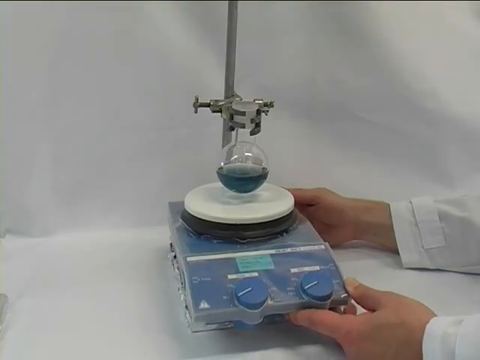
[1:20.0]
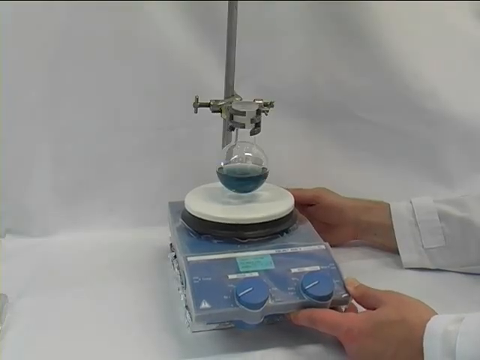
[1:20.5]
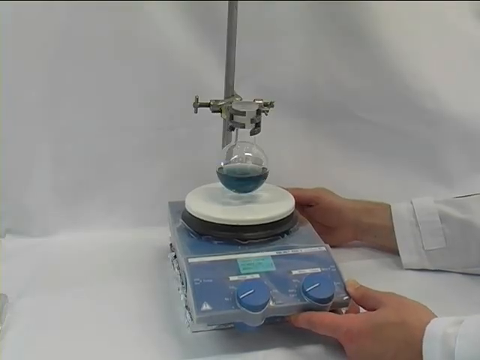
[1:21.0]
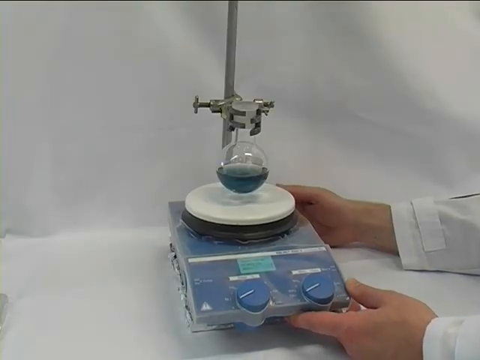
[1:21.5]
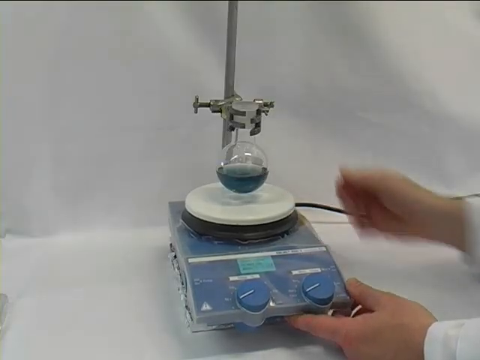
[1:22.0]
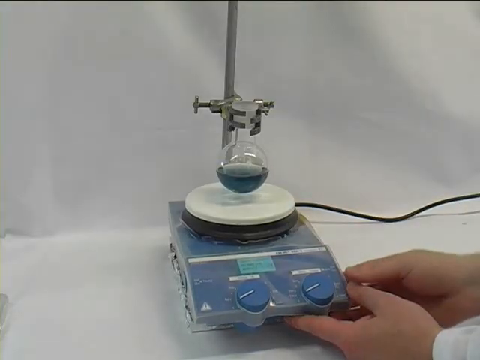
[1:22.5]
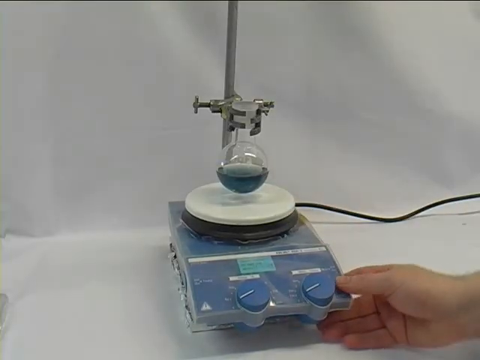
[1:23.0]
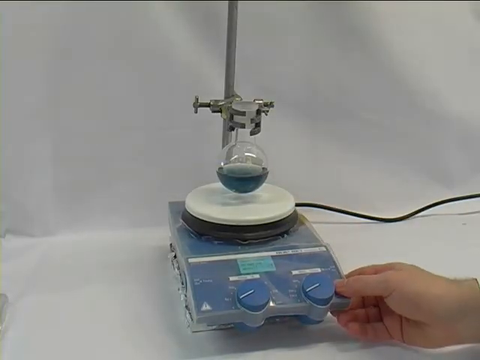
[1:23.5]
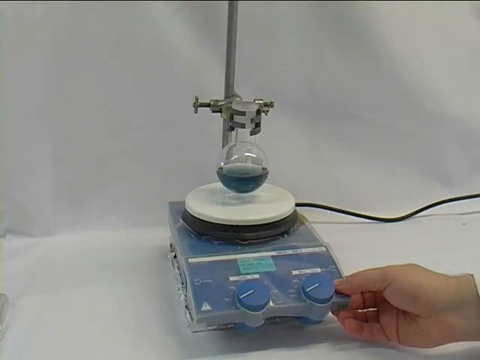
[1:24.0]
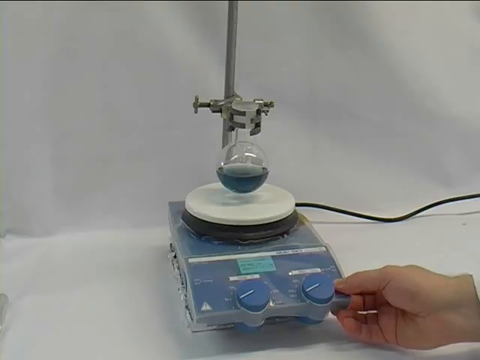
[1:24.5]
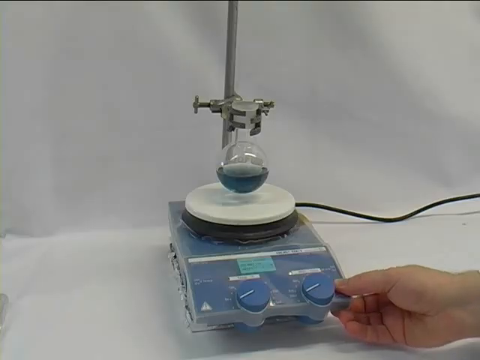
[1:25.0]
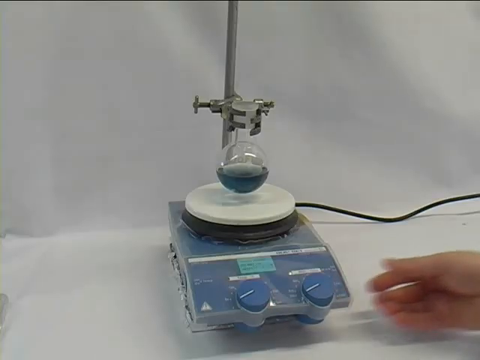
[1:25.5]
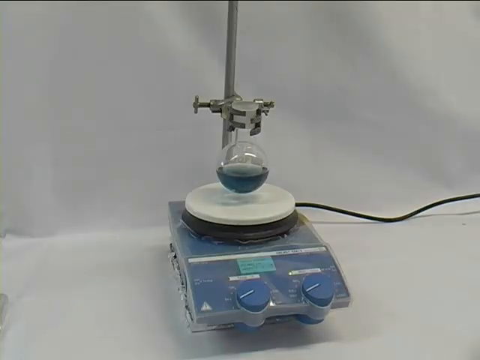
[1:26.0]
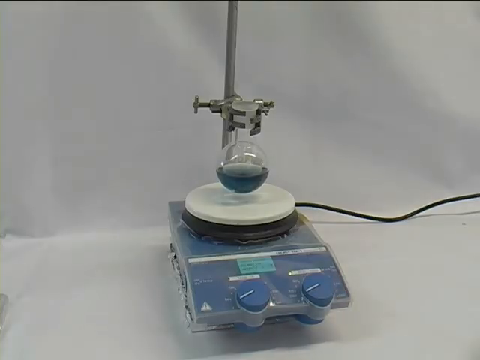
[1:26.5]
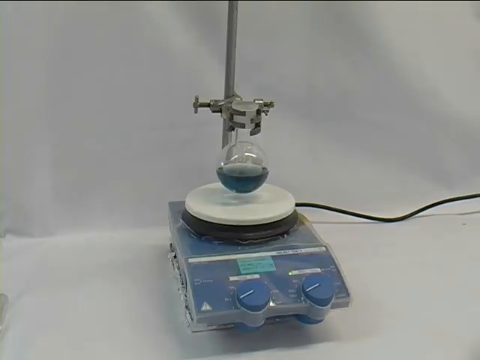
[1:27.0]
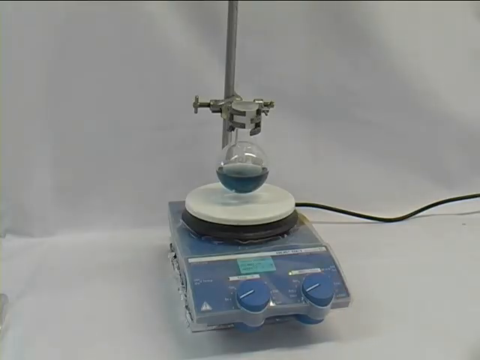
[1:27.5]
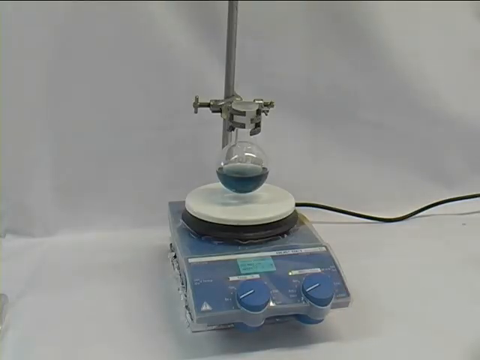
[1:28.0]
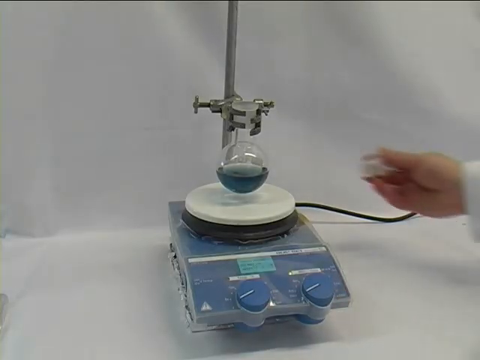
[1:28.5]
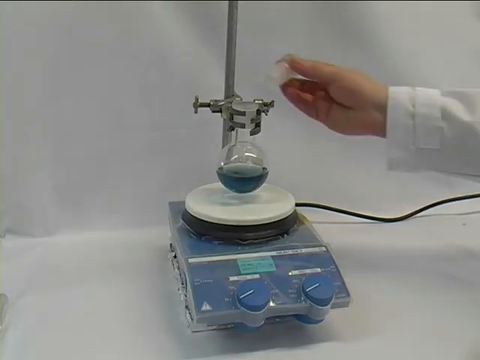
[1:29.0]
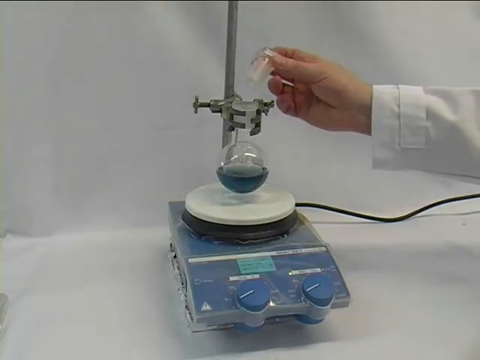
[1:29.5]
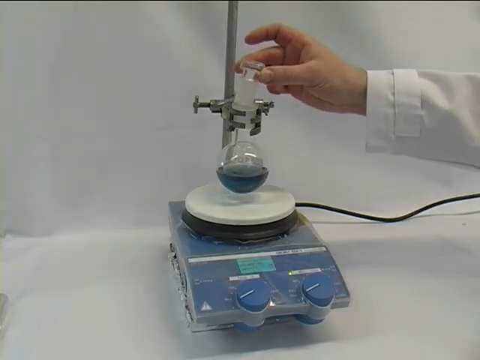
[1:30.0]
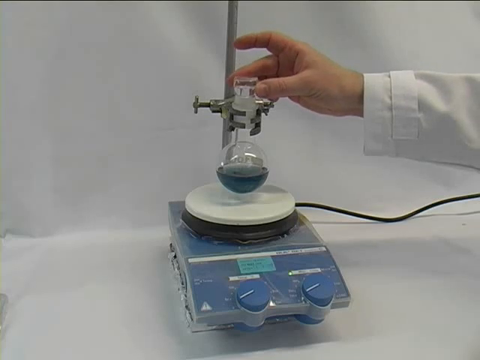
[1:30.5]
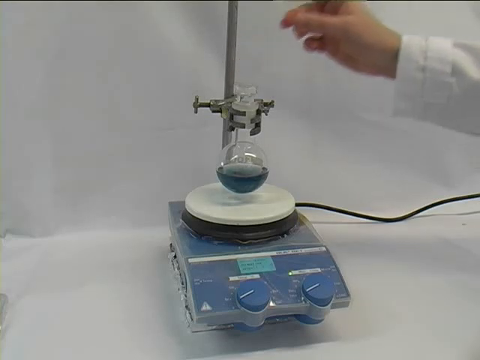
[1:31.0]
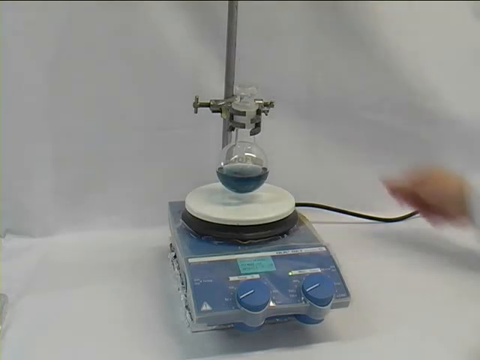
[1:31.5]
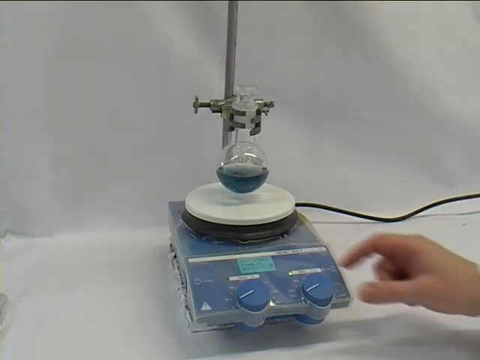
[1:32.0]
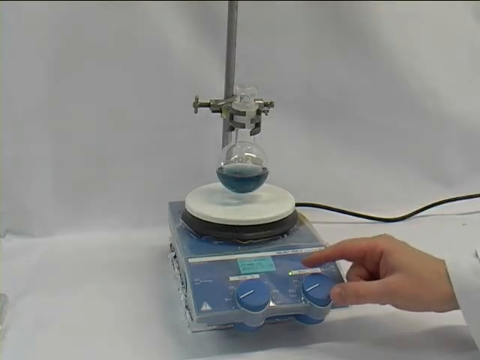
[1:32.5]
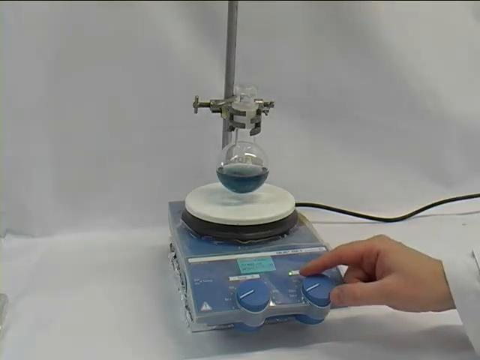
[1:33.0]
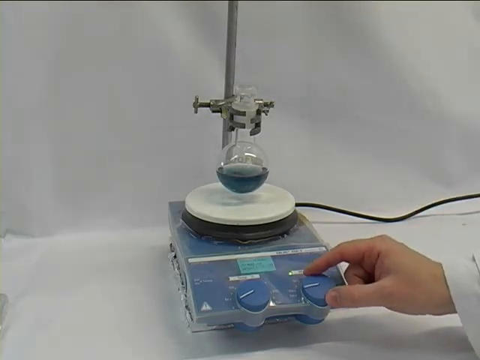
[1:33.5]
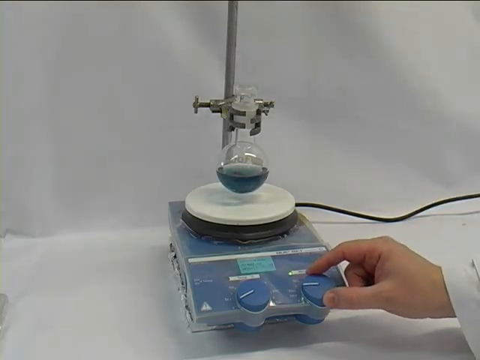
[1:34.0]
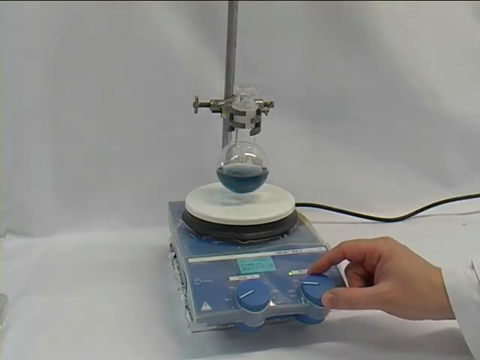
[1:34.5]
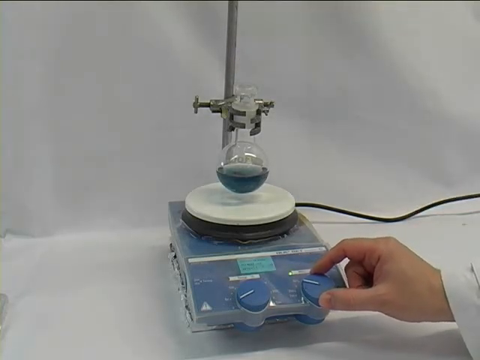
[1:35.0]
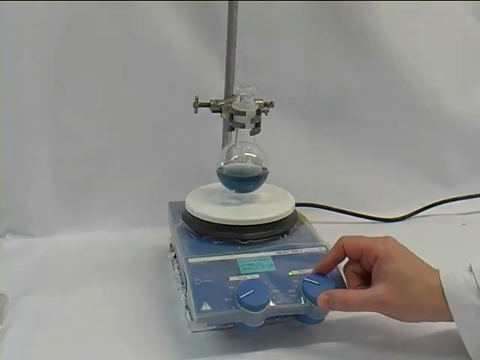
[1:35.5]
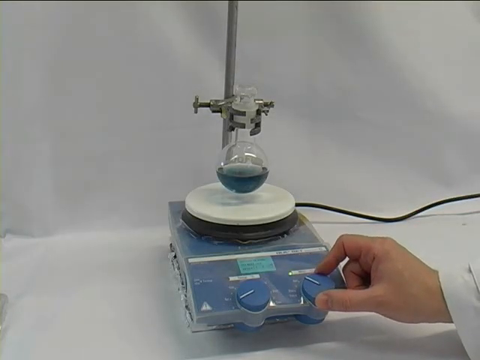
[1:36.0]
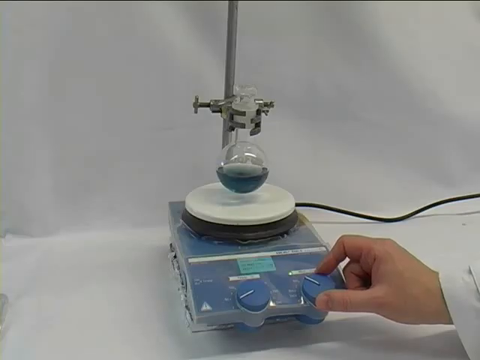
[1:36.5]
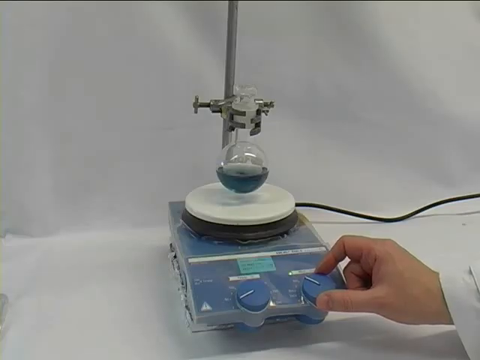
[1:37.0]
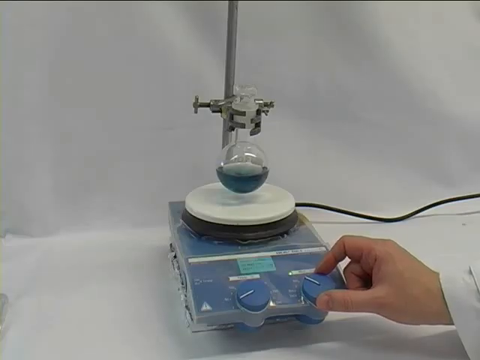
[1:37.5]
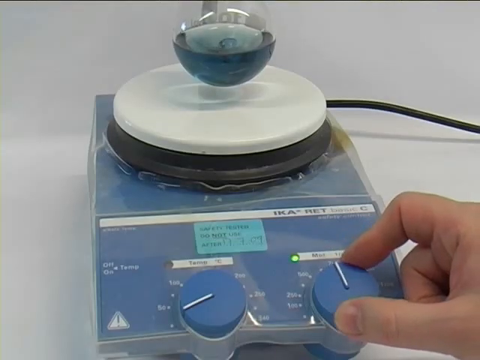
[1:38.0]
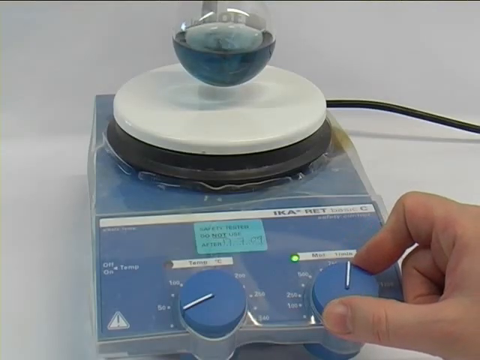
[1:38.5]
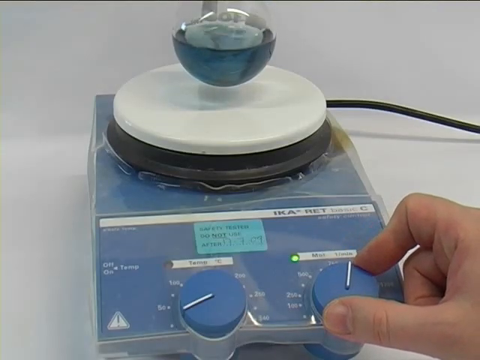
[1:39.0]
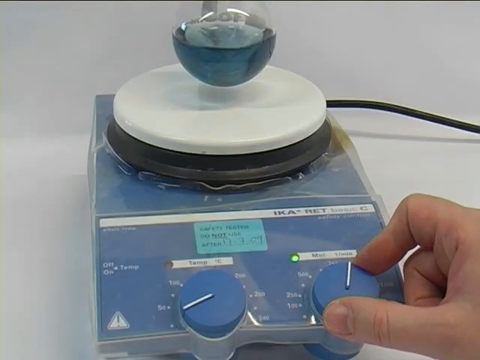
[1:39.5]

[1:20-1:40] A blue machine has two blue knobs with lines pointing at different settings. On top of the machine is a circular white table-like piece. The blue part of the machine looks like it is covered with clear plastic for protection. The machine is sitting on a white table, with a white wall in the background. An electrical cord comes out of the back of the machine and goes off to the right along the wall. Two hands of a person with white skin are holding or adjusting the machine. A metal rod comes out of the back of the machine and goes up vertically, with some kind of clamp attached to it by a screw. The clamp holds a vial right over the circular white table on the machine. There is dark blue fluid inside the vial. The person starts the machine, and the fluid begins to move around a little. They put a cork on top of the vial and turn the knob.